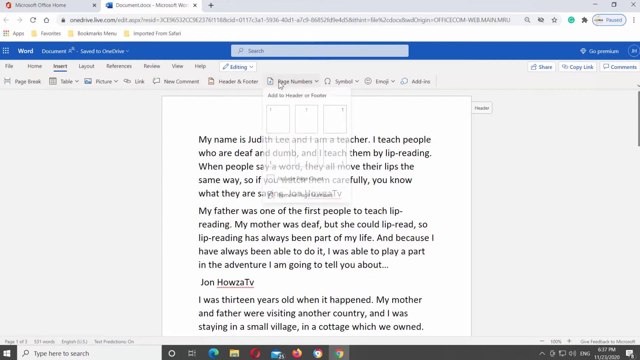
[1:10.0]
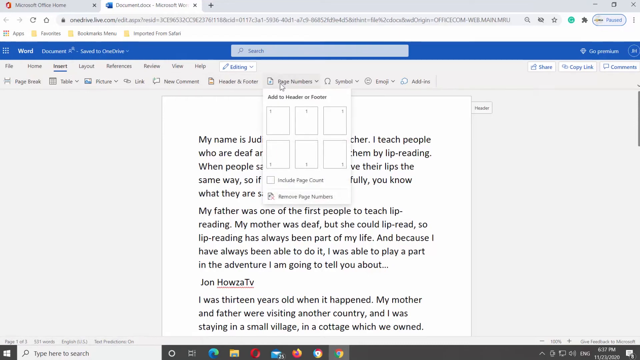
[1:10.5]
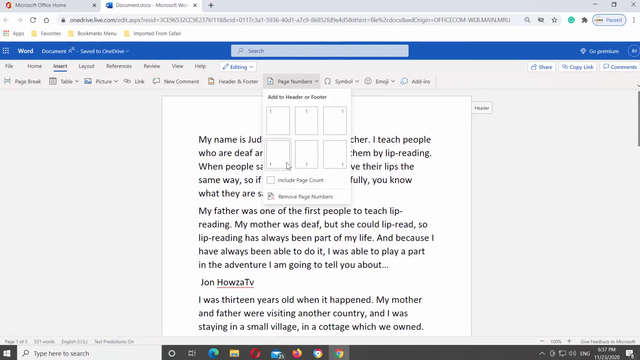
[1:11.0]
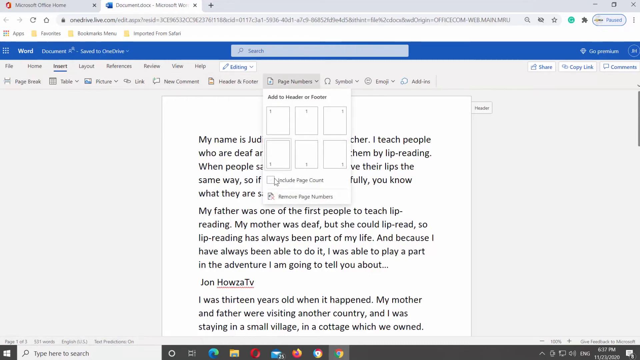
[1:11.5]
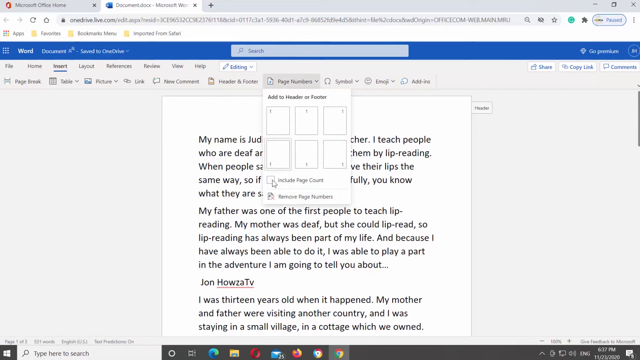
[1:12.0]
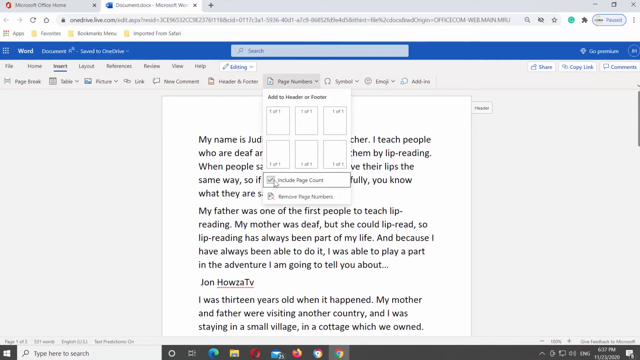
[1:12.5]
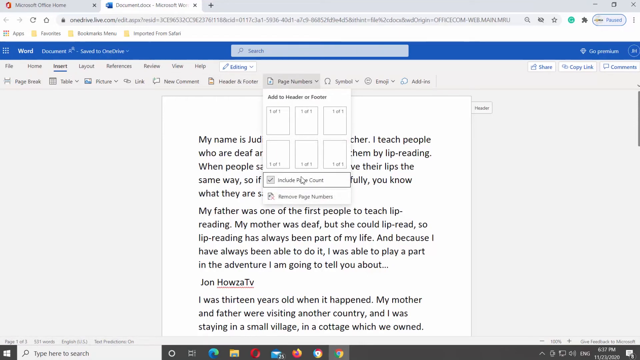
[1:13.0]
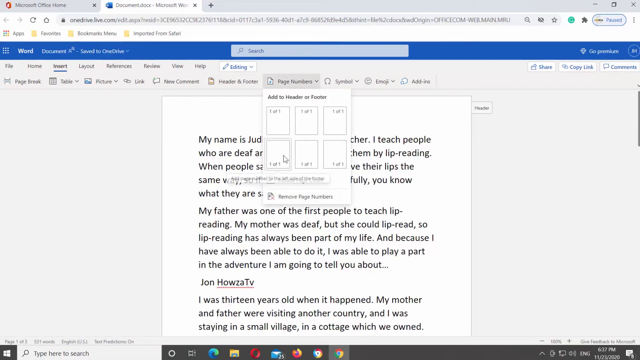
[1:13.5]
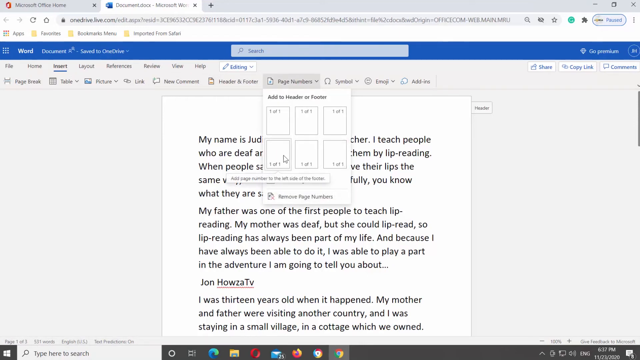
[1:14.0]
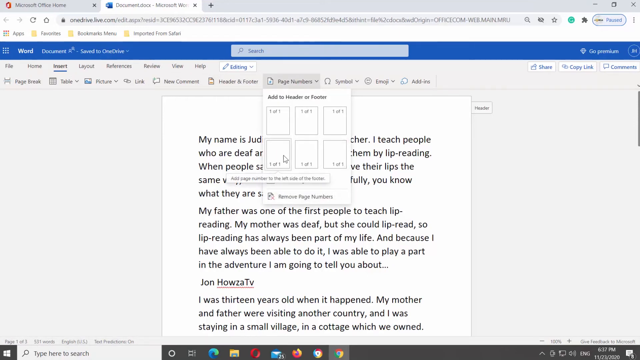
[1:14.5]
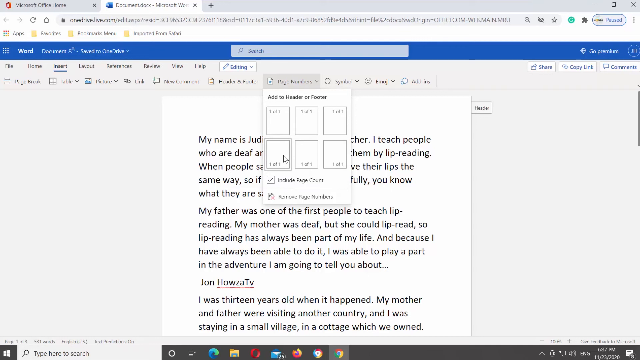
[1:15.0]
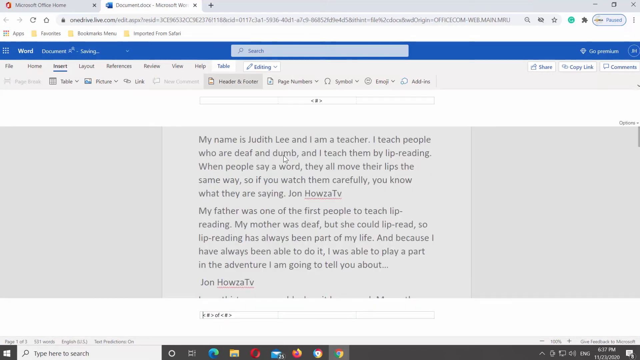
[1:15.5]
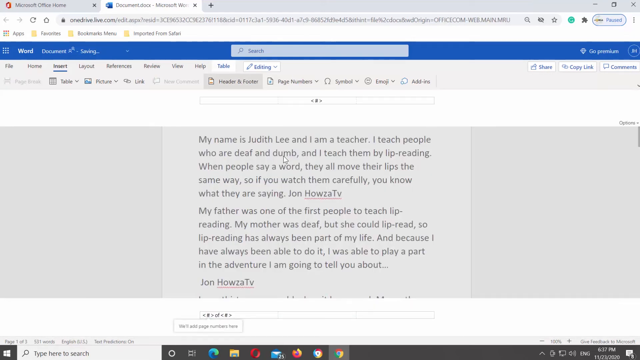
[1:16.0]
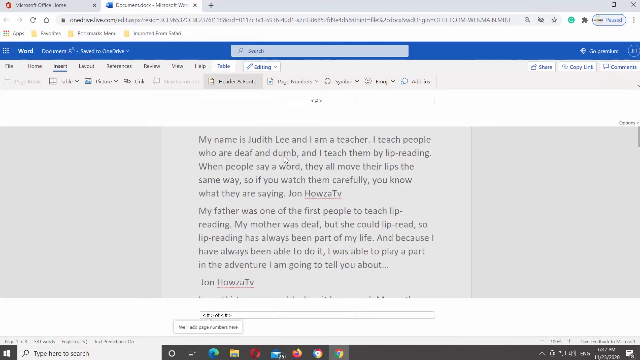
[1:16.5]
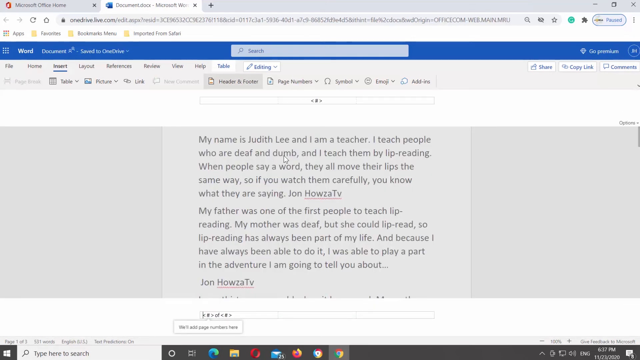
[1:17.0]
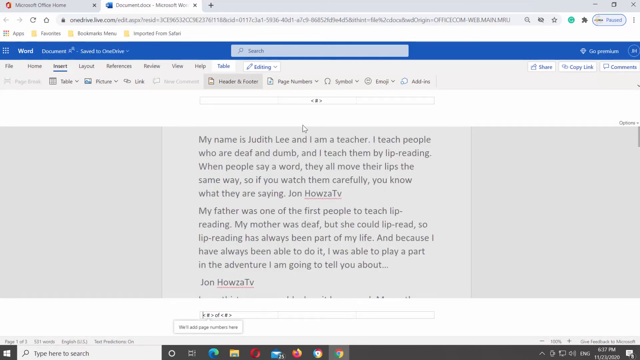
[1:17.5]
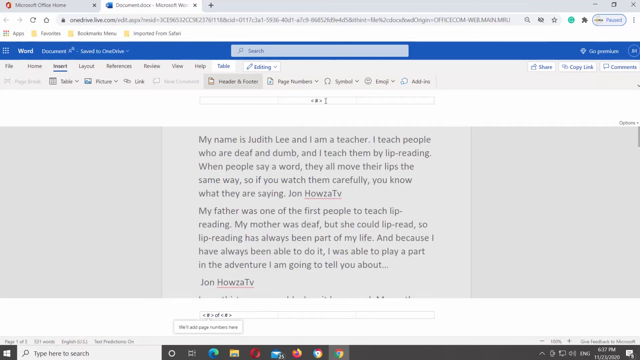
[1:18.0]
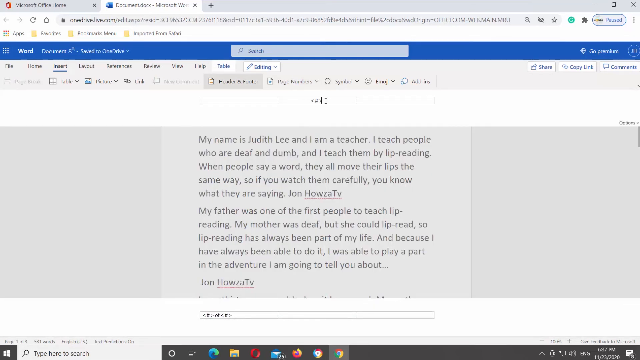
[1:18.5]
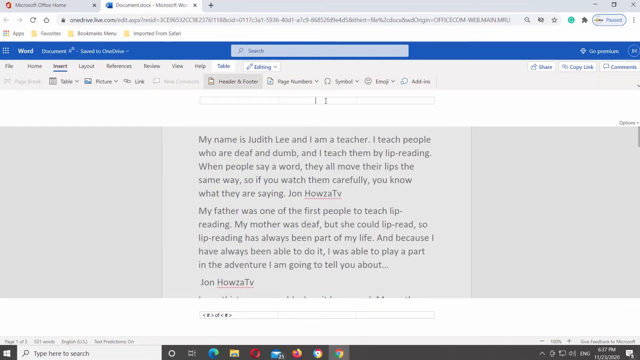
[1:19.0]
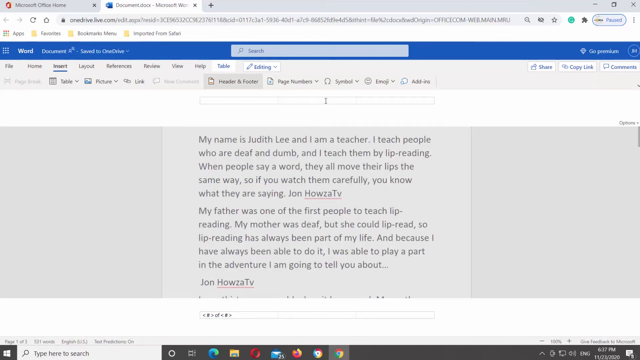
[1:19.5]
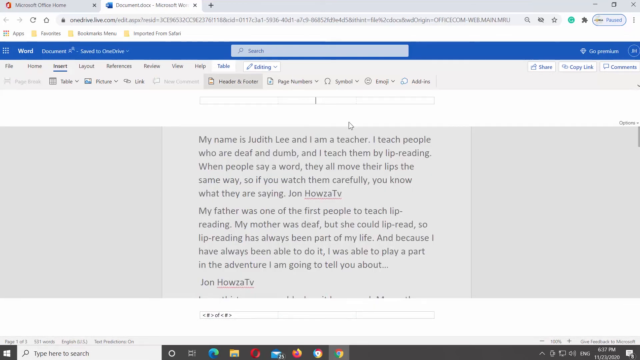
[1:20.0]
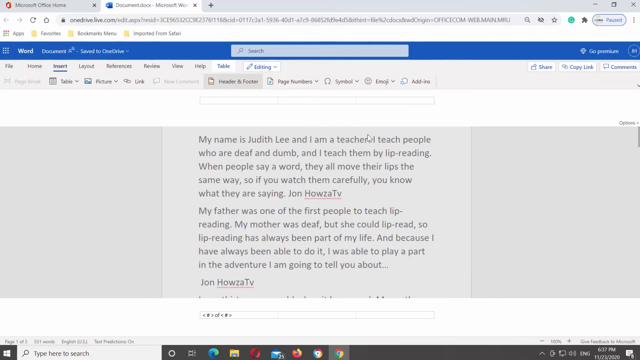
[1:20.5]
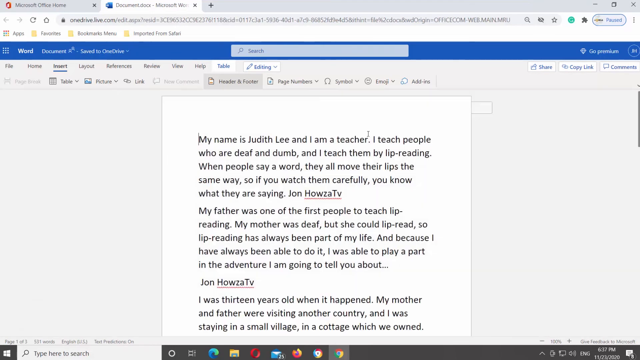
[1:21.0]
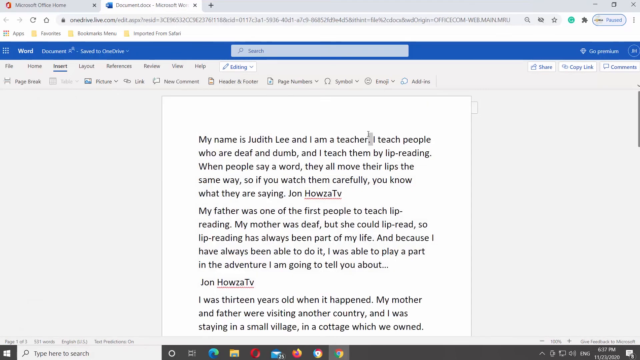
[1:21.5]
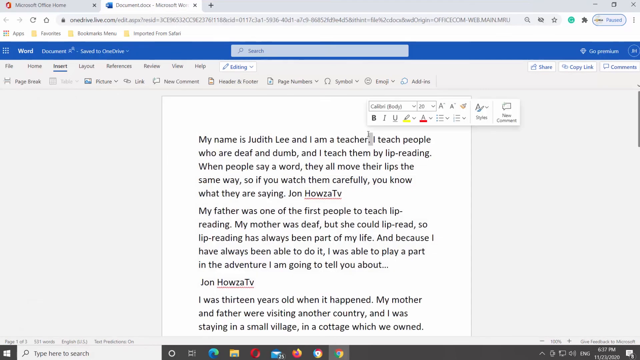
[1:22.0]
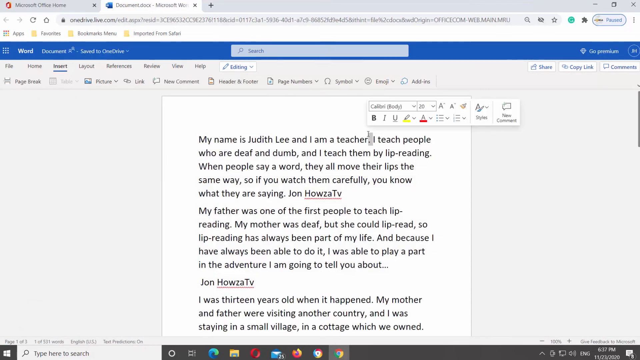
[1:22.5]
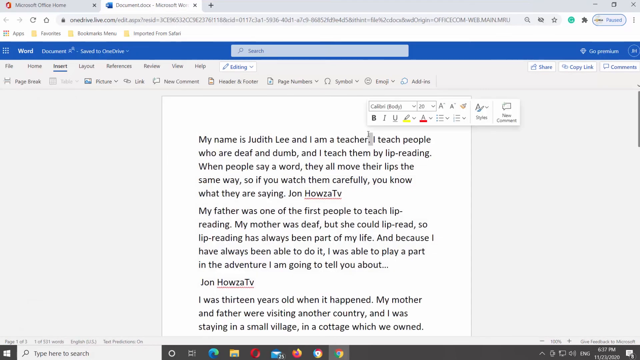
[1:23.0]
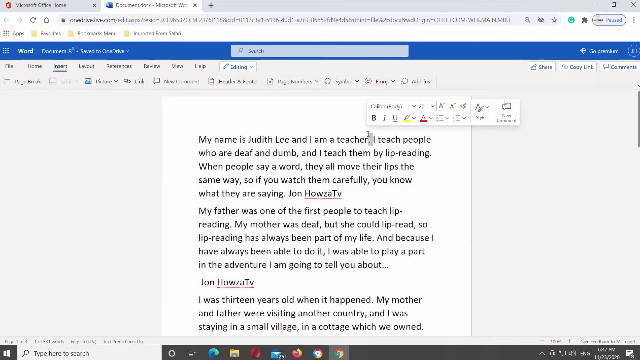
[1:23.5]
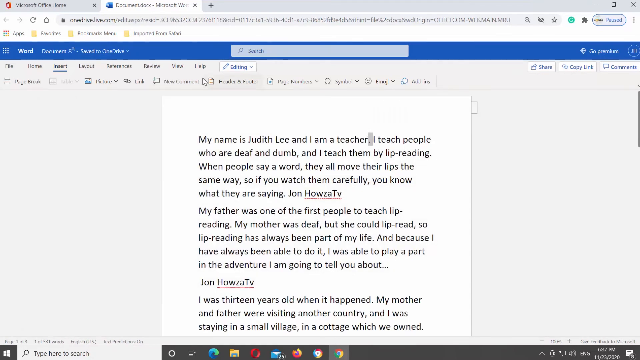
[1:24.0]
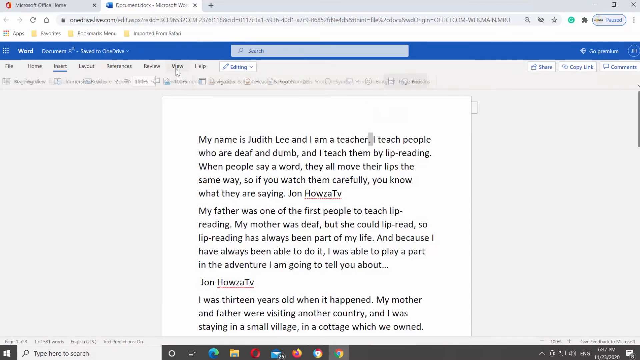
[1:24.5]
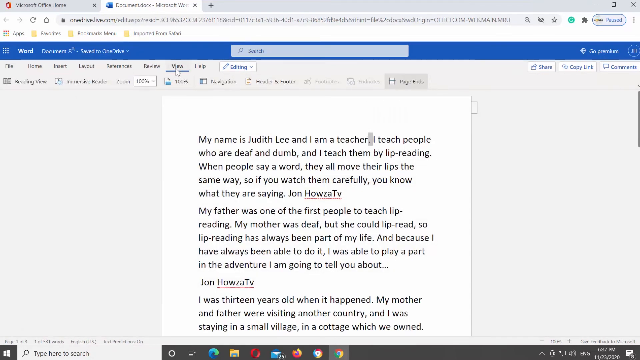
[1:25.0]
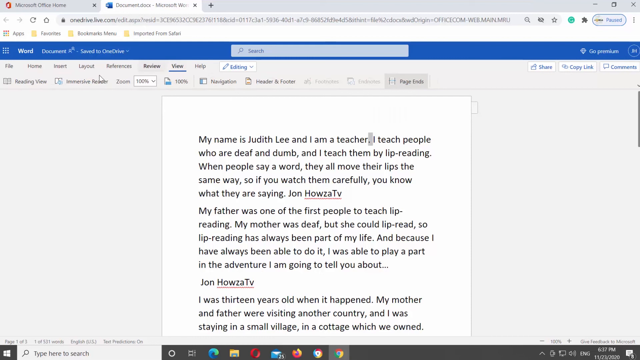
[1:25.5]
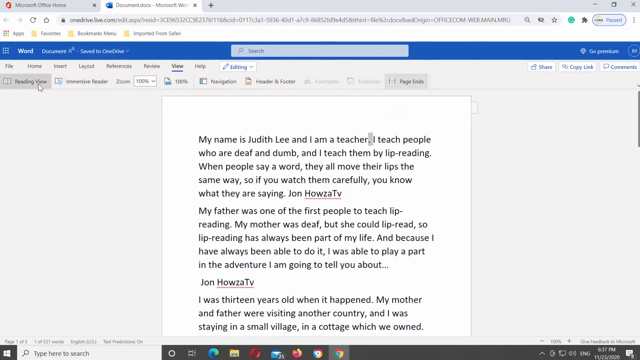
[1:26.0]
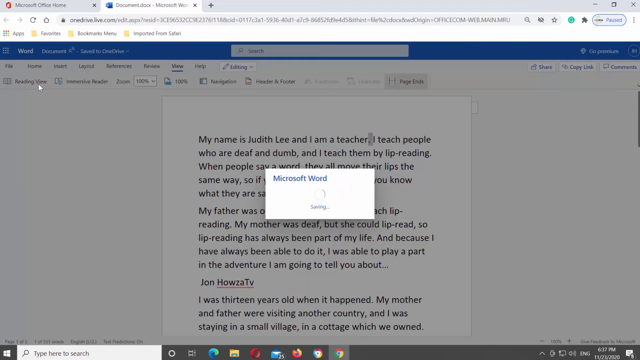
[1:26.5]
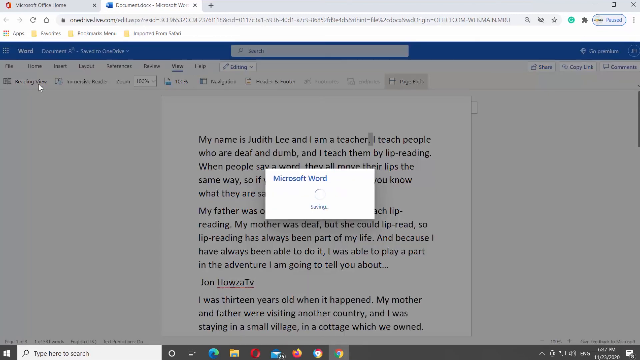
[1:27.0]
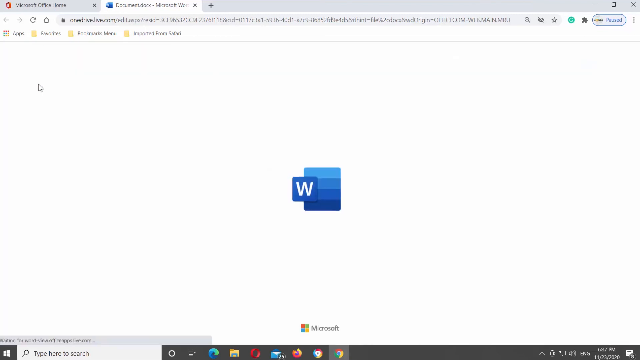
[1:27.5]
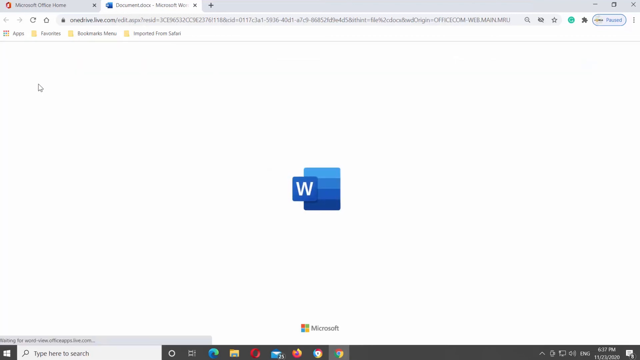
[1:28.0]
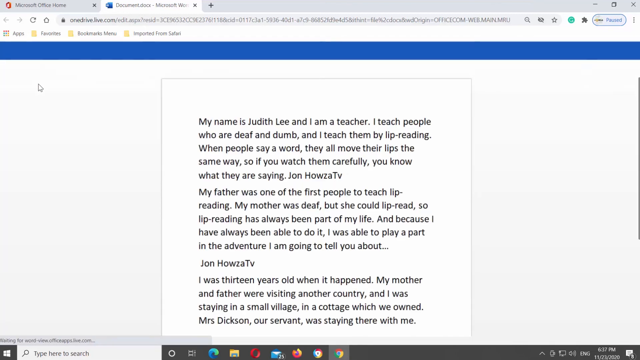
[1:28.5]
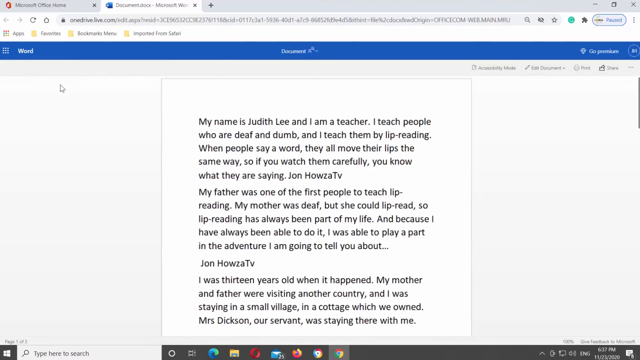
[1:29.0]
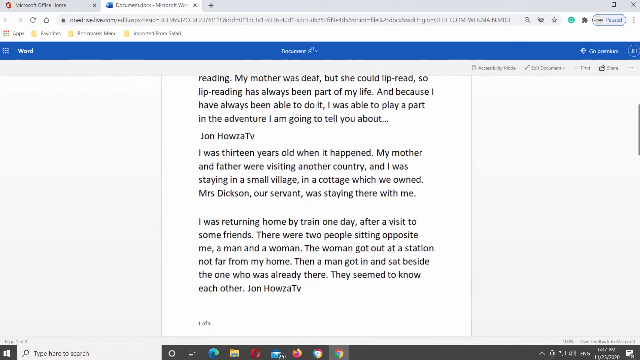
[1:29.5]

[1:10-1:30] The desktop home page has icons for PowerPoint, Excel and OneNote for making documents, and on the other side two pinned icons: Google Chrome and a Word document. A person navigates to the icon to edit his document and writes a letter in the Word app introducing himself as Shuri, a teacher of deaf people. The letter tells how he started teaching deaf people, says his father was one of the first people to teach lip reading, and says his mother was deaf. He continues editing the document, changes the view, and saves the Word document on his desktop.